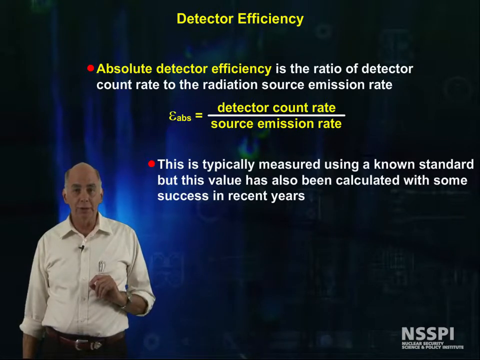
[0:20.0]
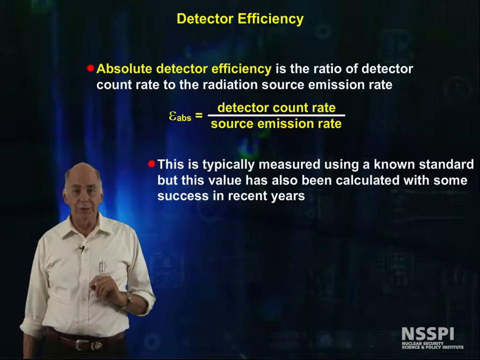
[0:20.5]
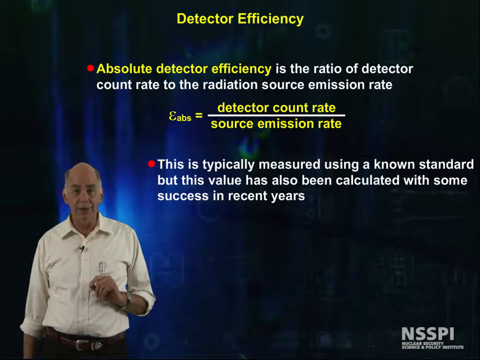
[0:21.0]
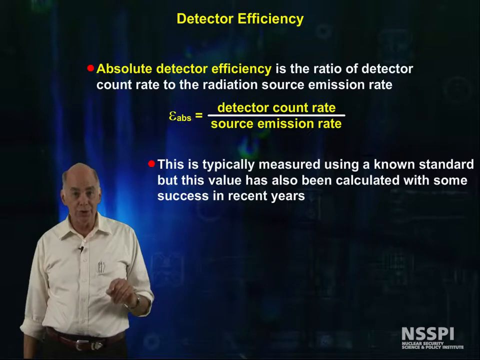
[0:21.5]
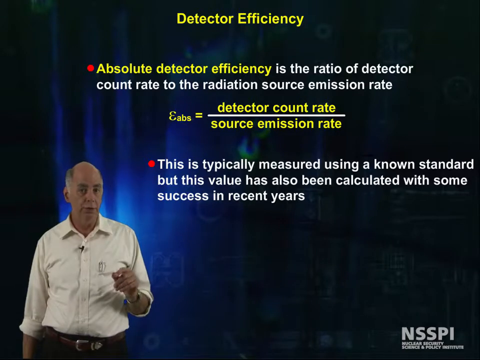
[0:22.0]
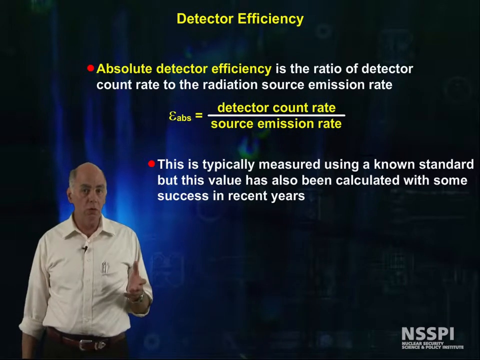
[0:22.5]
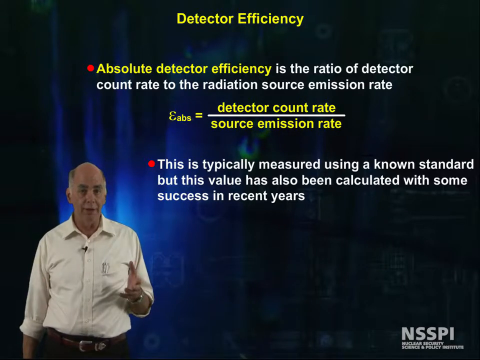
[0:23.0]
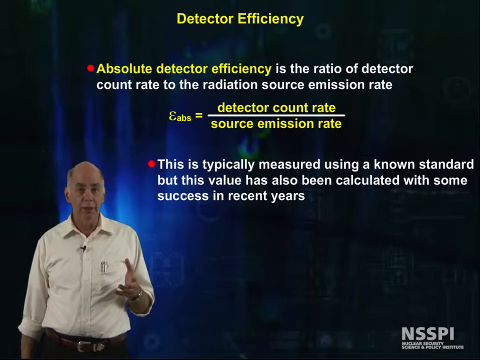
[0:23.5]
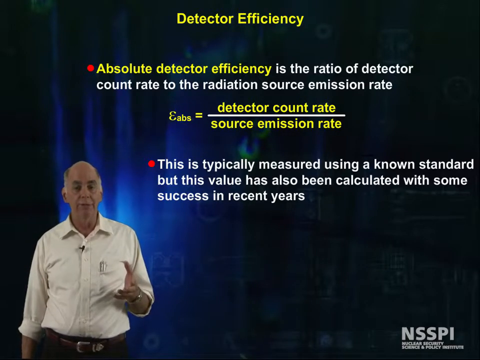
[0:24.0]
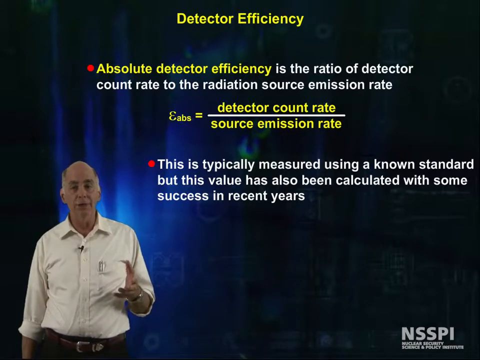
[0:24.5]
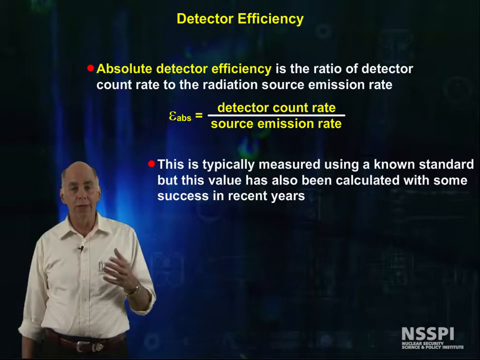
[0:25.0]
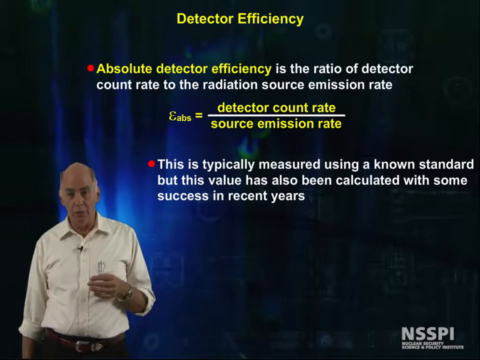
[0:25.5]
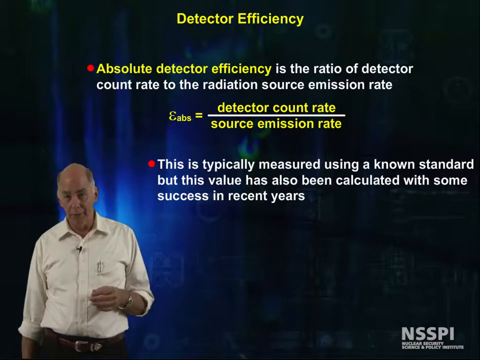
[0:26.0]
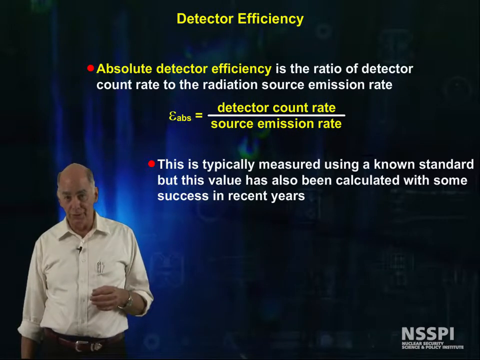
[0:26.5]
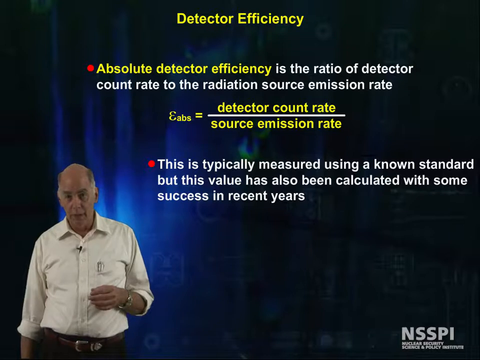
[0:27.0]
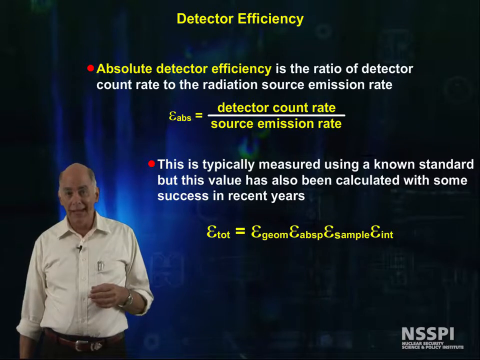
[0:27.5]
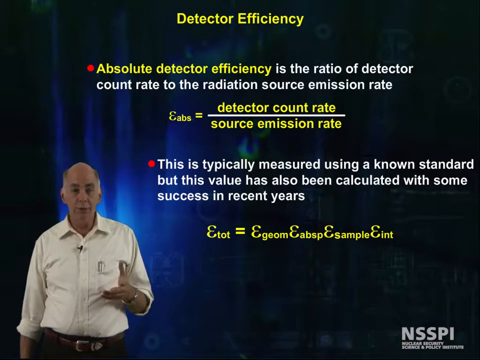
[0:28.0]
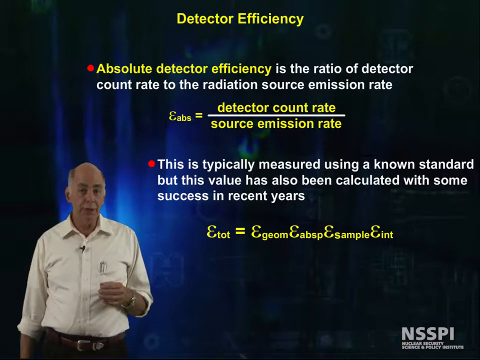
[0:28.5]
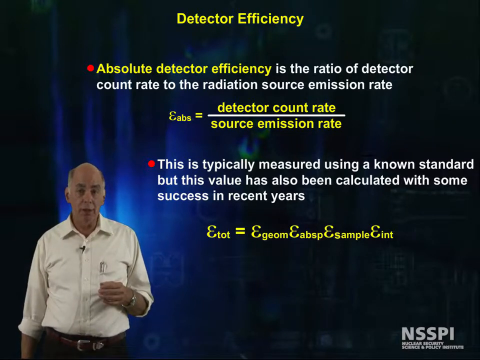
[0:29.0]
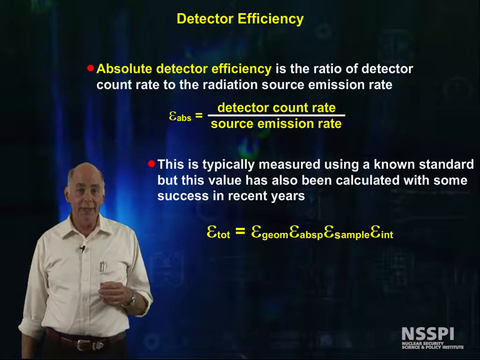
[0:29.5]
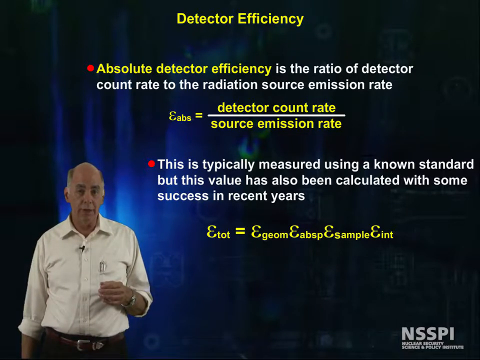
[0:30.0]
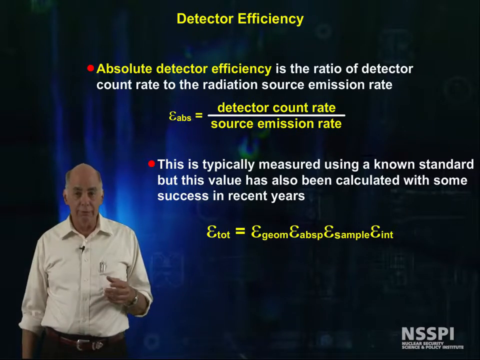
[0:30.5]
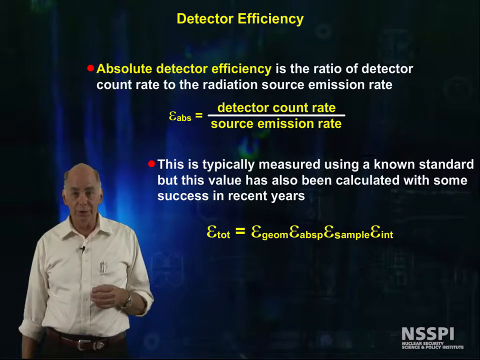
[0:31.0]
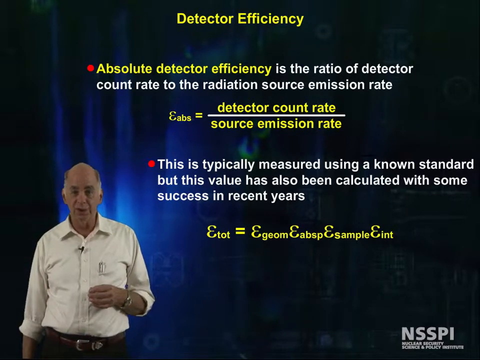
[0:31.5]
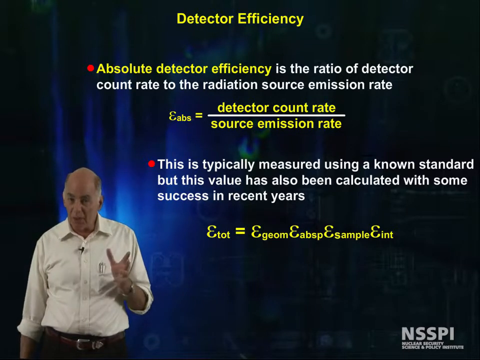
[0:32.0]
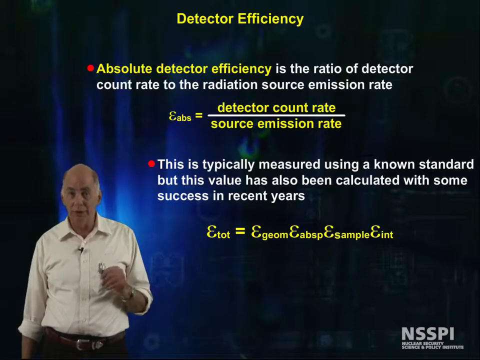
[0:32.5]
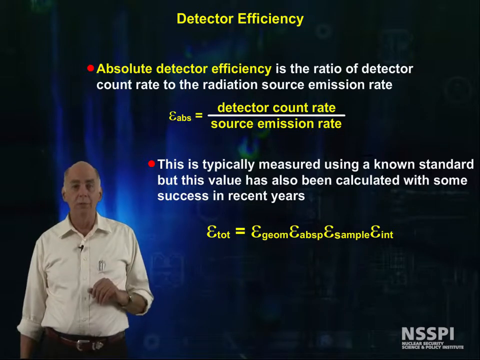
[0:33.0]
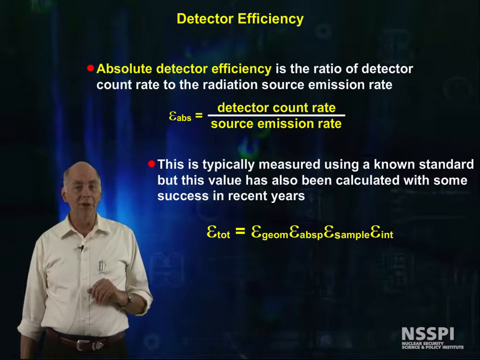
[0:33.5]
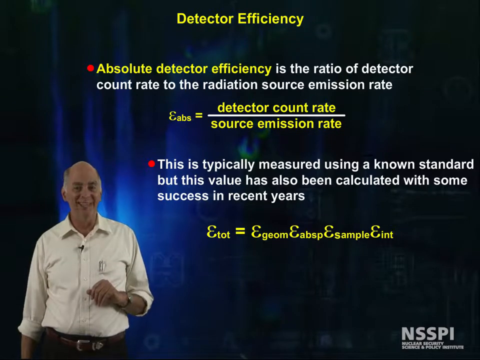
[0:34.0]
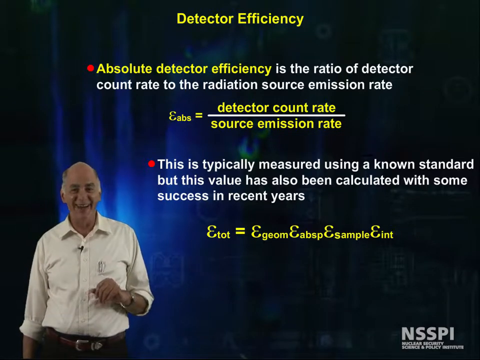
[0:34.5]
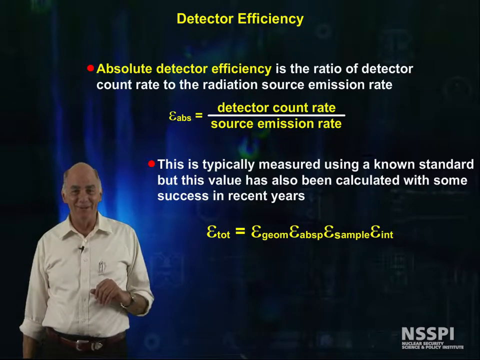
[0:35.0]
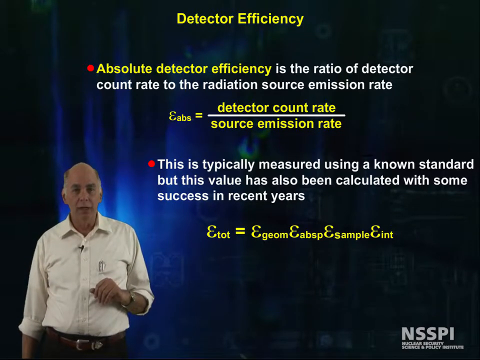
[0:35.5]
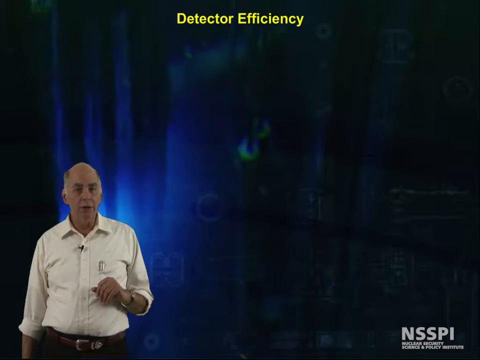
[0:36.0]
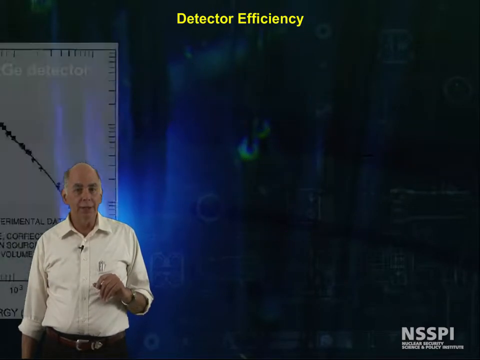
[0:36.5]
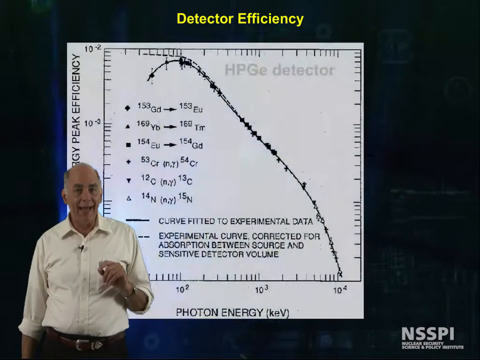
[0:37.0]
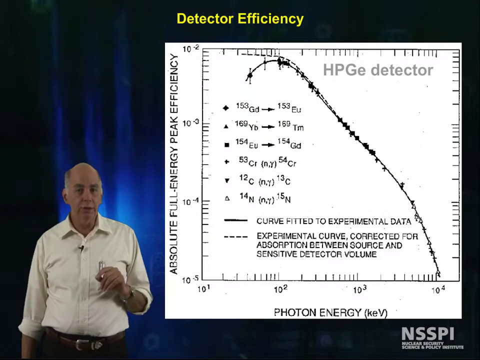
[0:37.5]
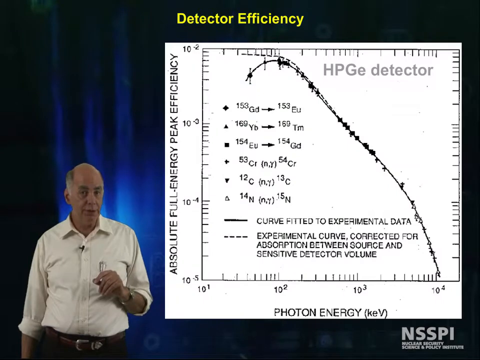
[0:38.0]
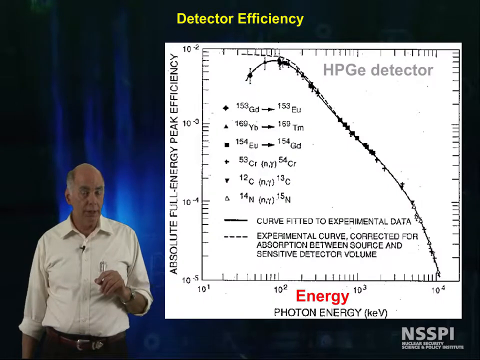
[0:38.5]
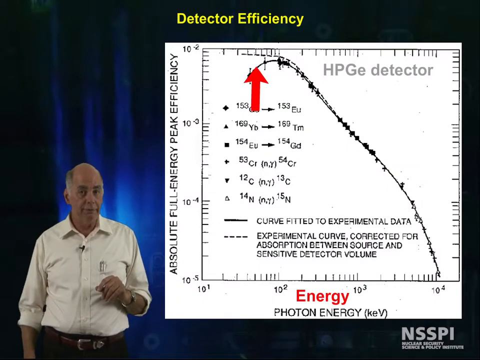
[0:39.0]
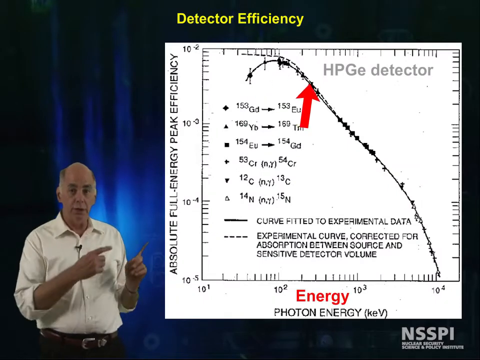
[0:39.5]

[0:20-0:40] A man gives a symposium or speech about a science topic, standing in the lower left corner of the frame. He is a Caucasian man, approximately mid to late 50s to early 60s, bald on top with salt-and-pepper hair on the sides, seen from the waist up, with a watch on his left wrist. He uses his hands as he speaks. Text comes up on the screen: at the top, in yellow, "detector efficiency," then "Absolute detector efficiency is the ratio of detector count rate to the radiation source emission rate," with the problem written out below in ratio form. Below that, bullet-pointed in red with white text, it reads "this is typically measured using a known standard but this value also been calculated with some success in recent years." The problem is shown with an equal sign. A sudden movement on the screen brings up a white chart labeled "energy photon energy." A red marker on the graph shows the "HPGE detector," and on the left side of the white graph is "absolute full energy peak efficiency." The man points toward it on the screen.